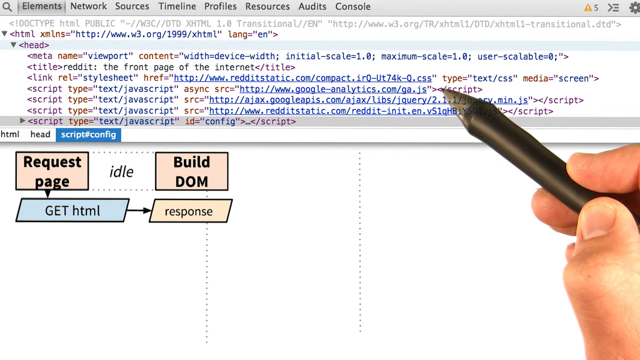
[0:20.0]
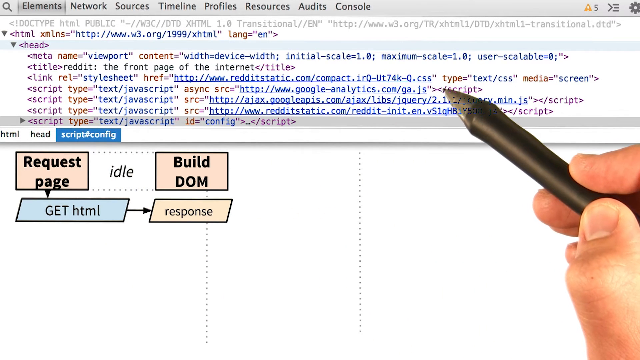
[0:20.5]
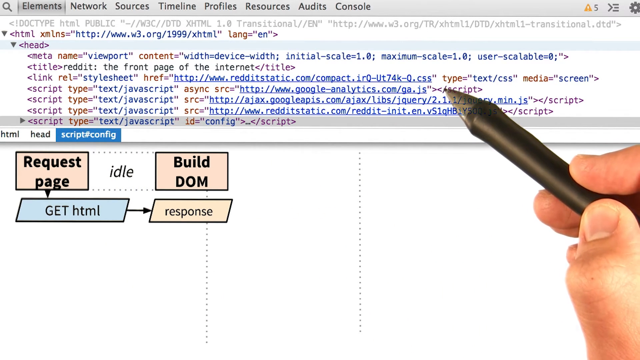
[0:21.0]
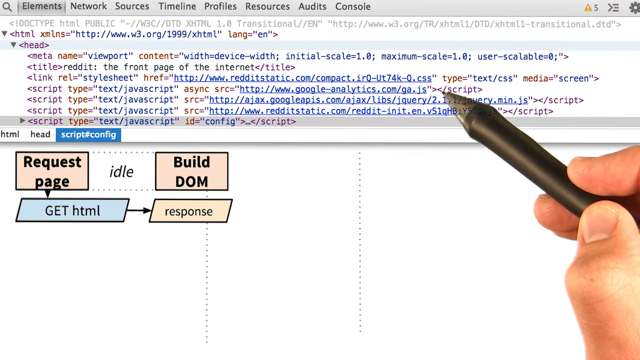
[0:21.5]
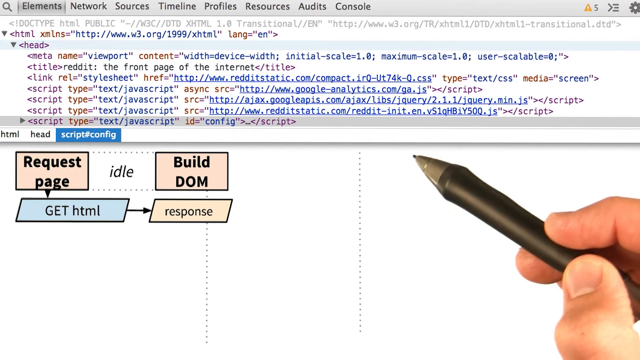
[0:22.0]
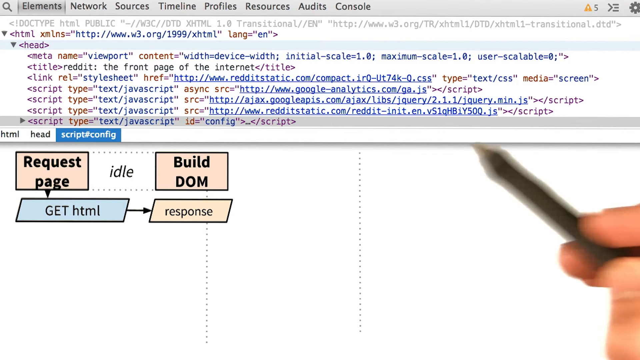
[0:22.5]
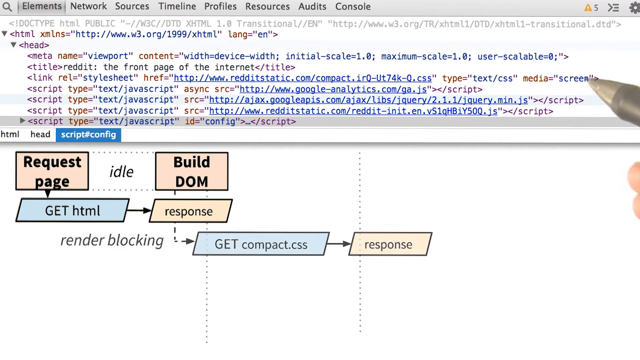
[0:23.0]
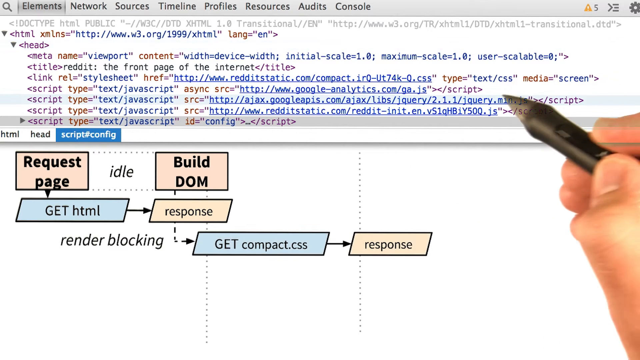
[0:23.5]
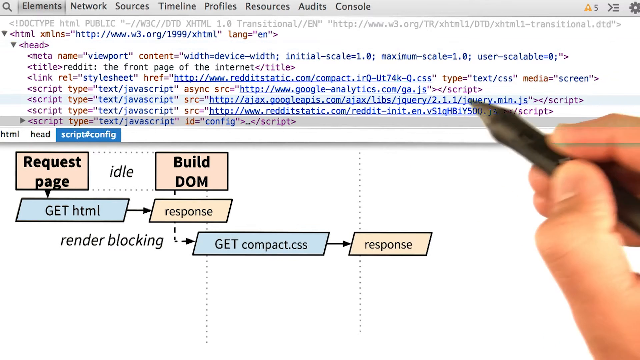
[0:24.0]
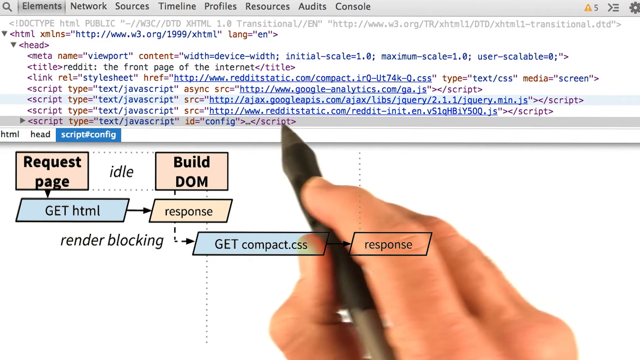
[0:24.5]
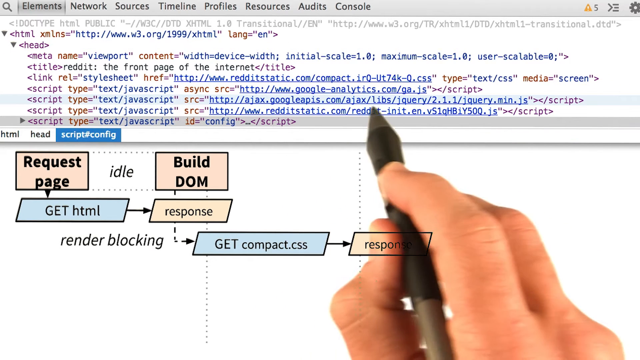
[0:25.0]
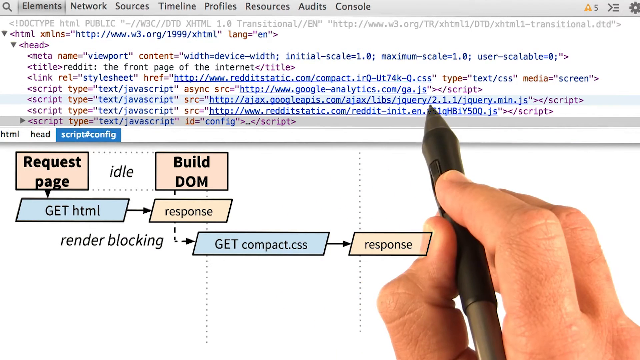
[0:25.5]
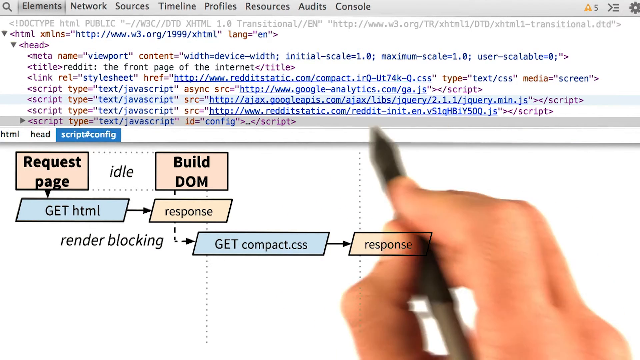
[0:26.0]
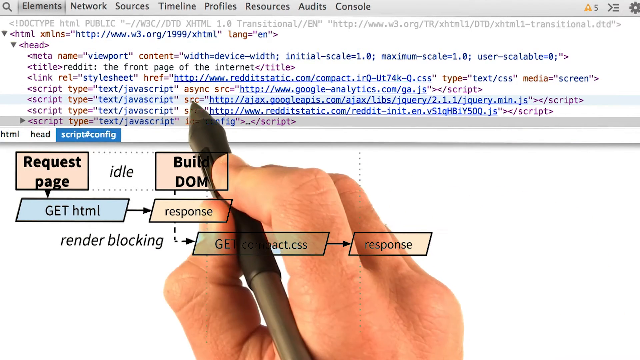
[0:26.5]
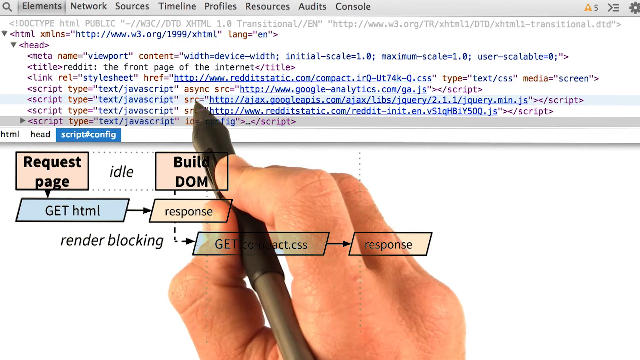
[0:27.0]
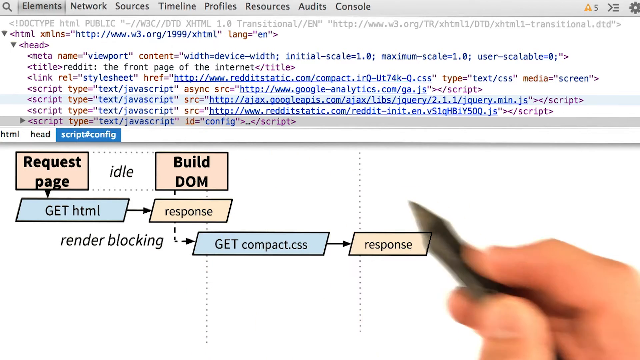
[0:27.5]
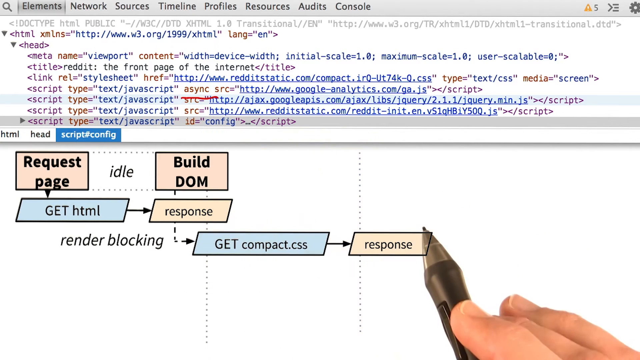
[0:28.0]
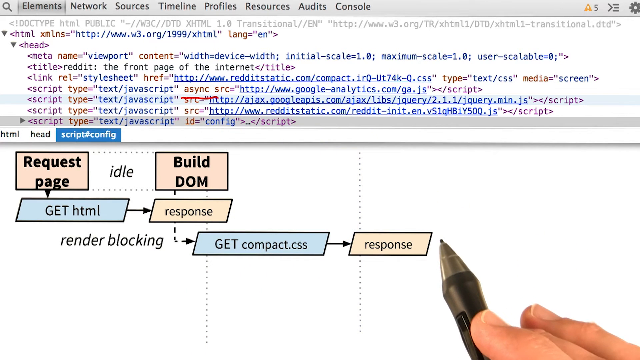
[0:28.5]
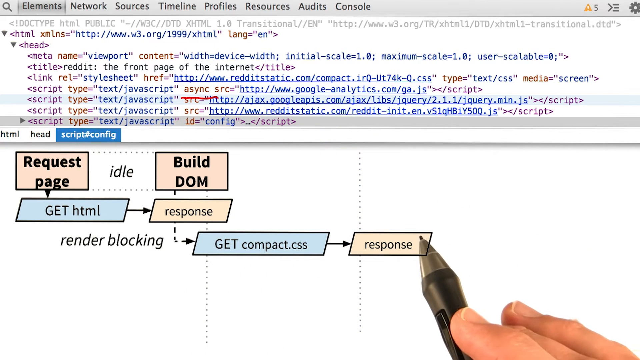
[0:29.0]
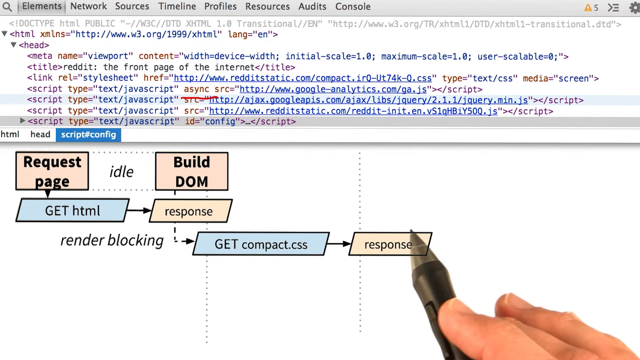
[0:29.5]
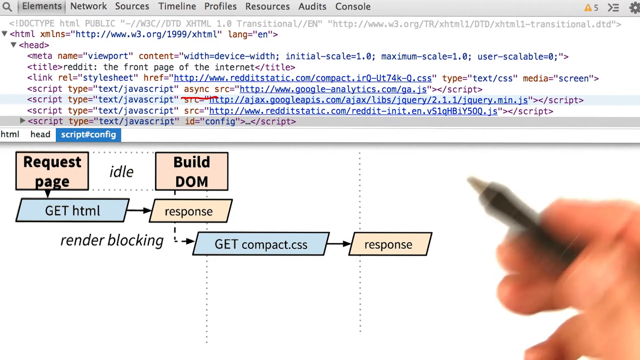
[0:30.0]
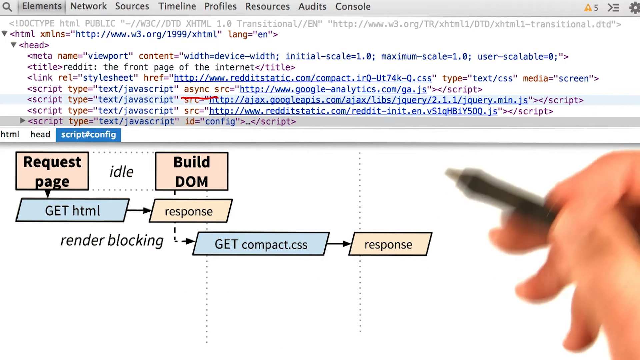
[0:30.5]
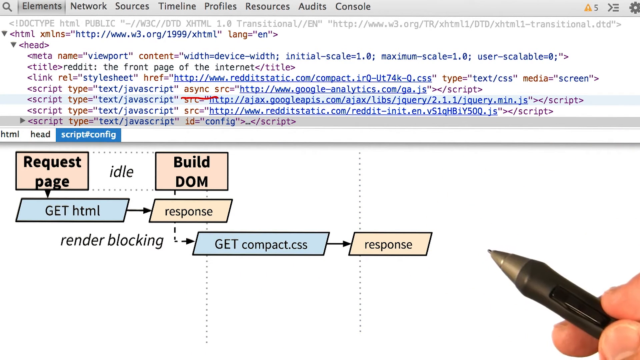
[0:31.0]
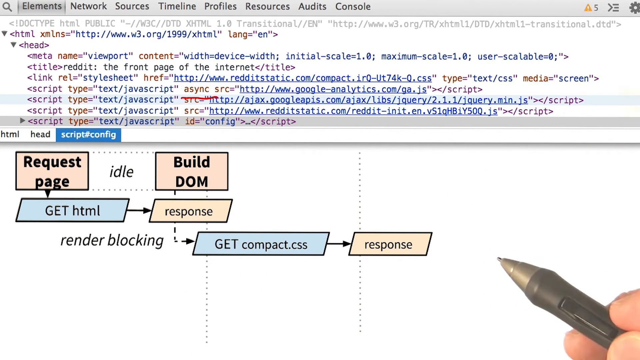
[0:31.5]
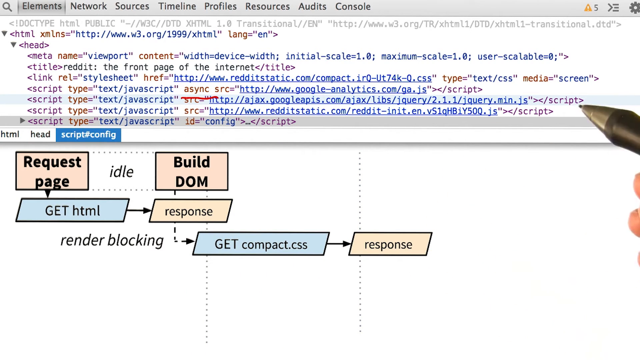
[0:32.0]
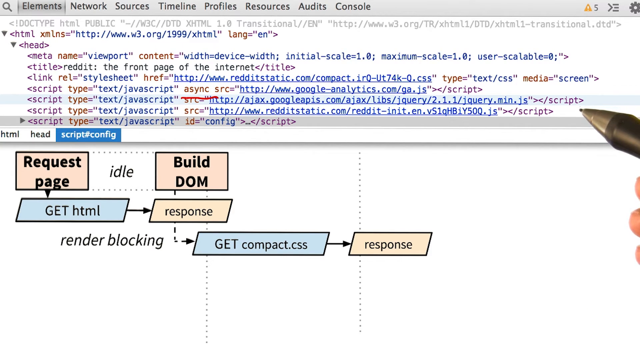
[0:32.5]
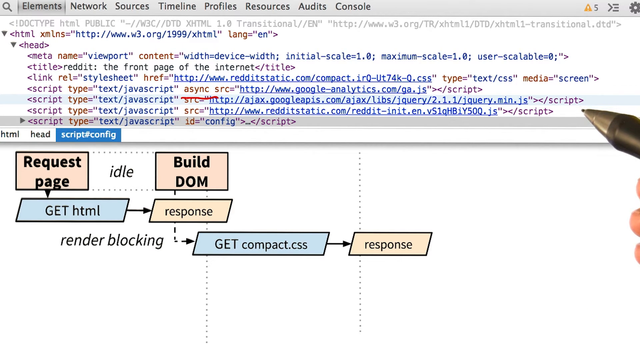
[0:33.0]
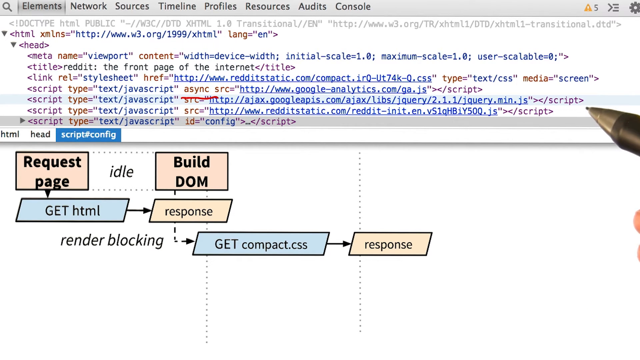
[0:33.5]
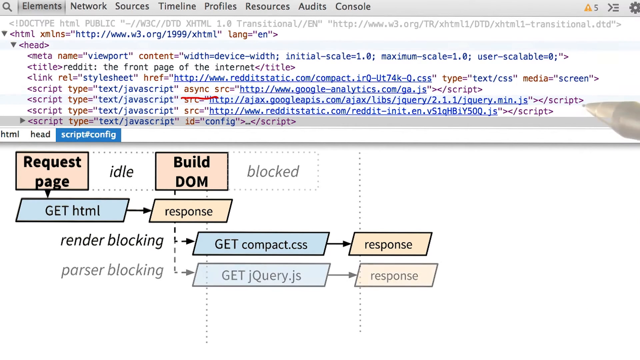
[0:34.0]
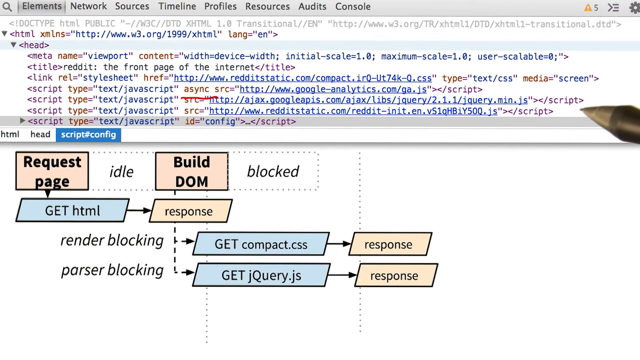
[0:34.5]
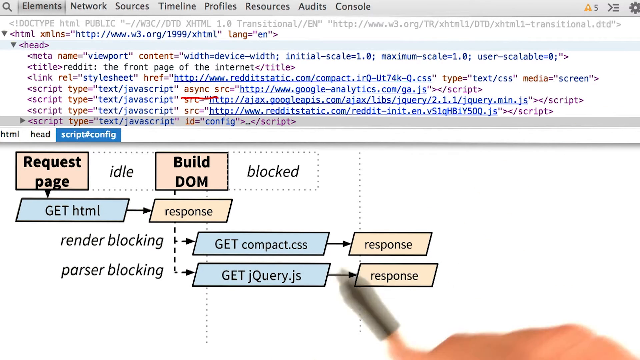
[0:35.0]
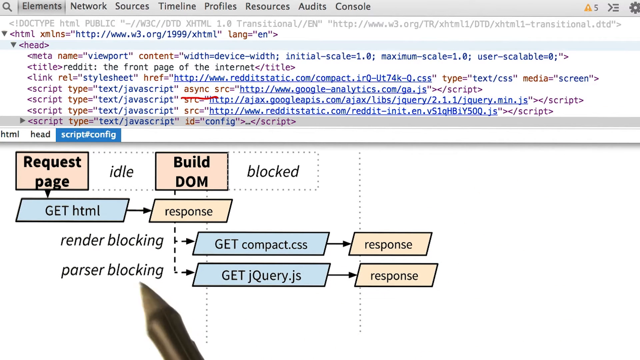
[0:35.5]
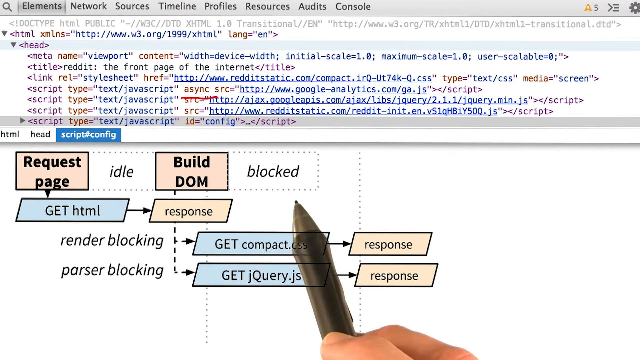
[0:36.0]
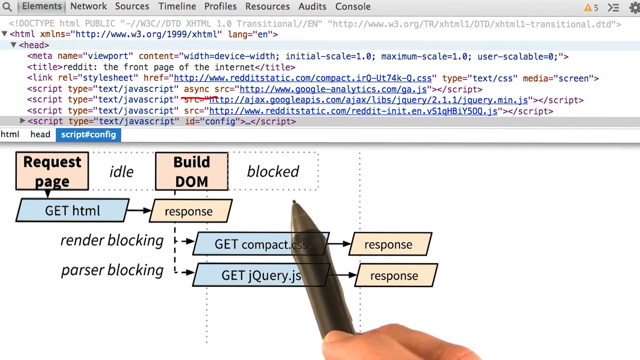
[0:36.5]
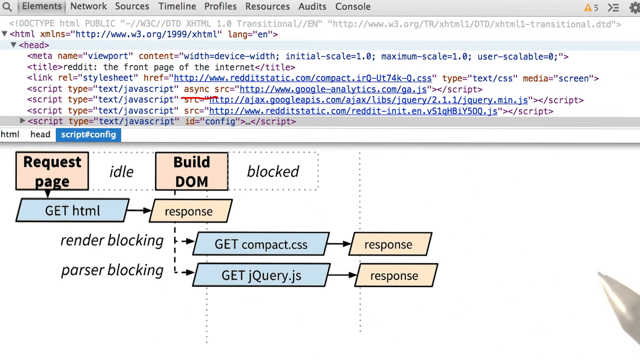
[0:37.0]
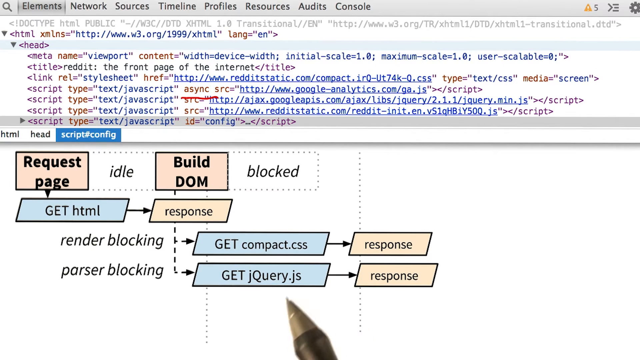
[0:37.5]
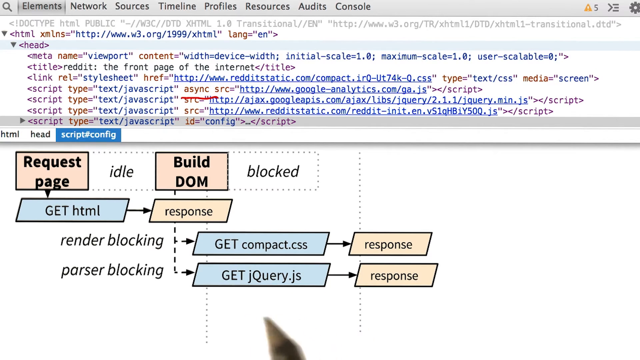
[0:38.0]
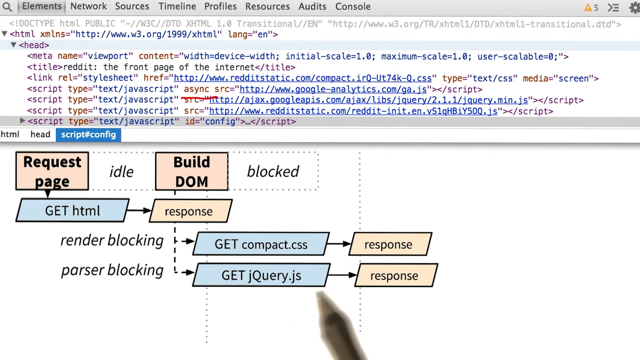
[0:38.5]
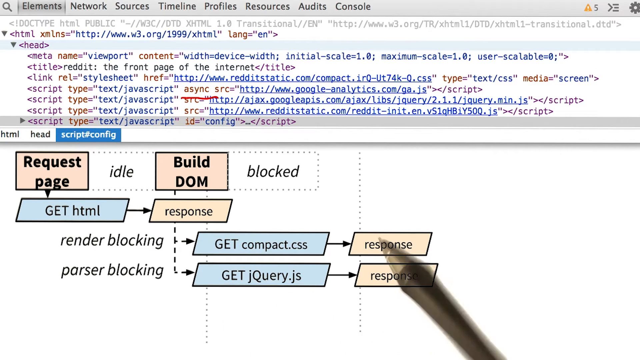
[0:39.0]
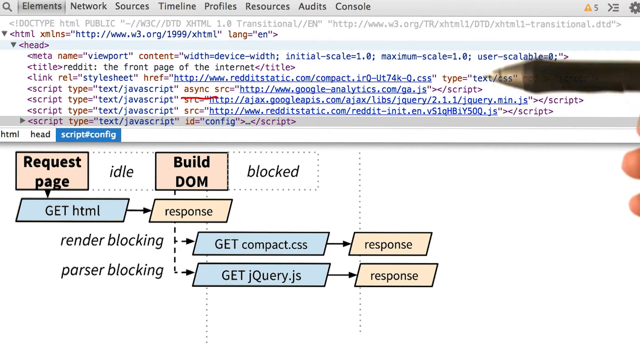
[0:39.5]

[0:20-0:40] The video looks like a training. The top of the page shows computer code, and the bottom part has what appears to be perhaps some training for coders. At the top is a line that says "HTML", with a line for "Head" underneath, continuing a few lines down. In the center of the page, on a white background, are a few boxes: one says "request page" and one says "build DOM". A blue box says "get HTML", with an arrow pointing to "response"; it looks a bit like a chart. A person's hand points to different parts of the code and then to these boxes. Later, a few more boxes appear: "render blocking", a blue box that says "get compact CSS", and another box with the word "response", with arrows pointing to them. The person goes back and forth between the lines and boxes using a stylus, apparently pointing out the lines of code that produce these particular pages or responses.